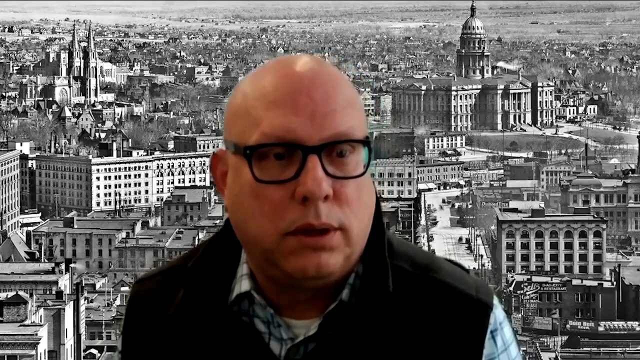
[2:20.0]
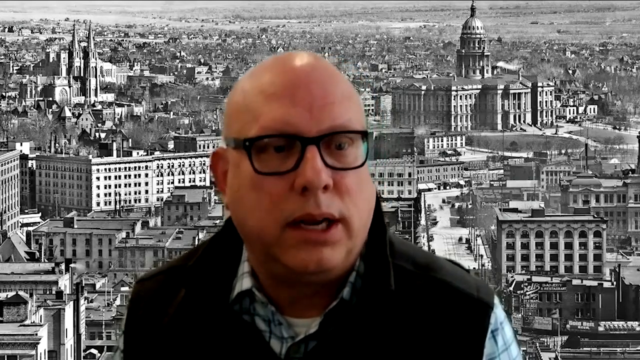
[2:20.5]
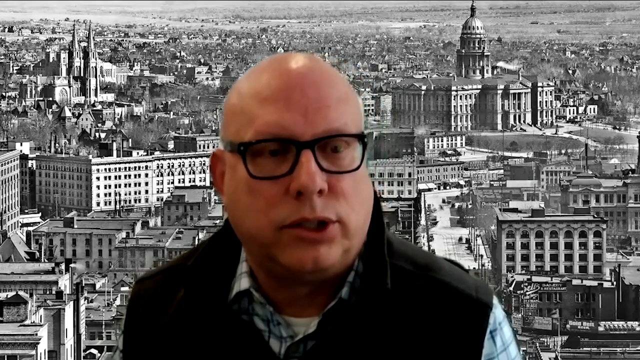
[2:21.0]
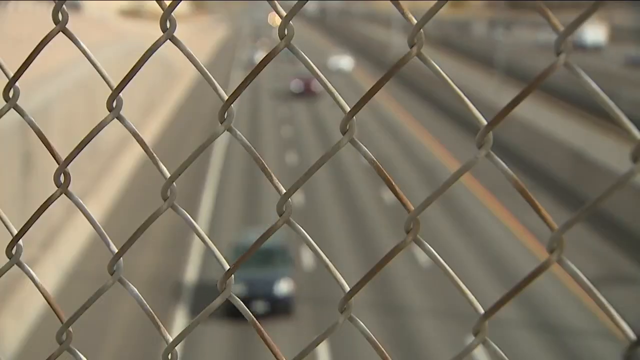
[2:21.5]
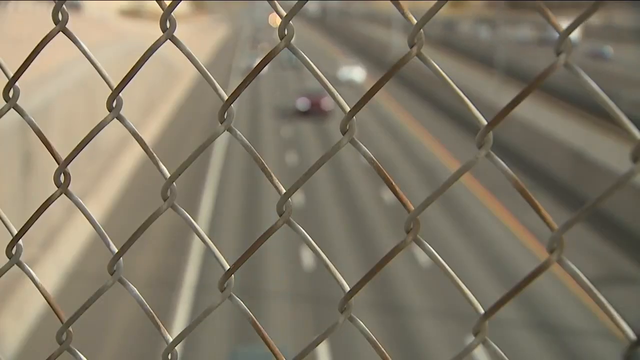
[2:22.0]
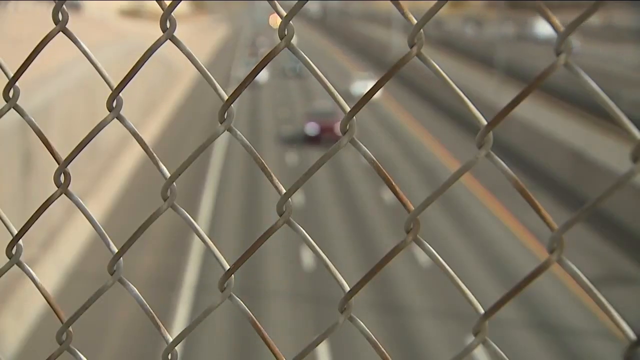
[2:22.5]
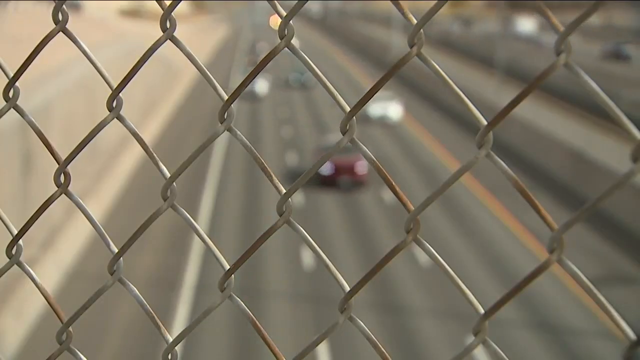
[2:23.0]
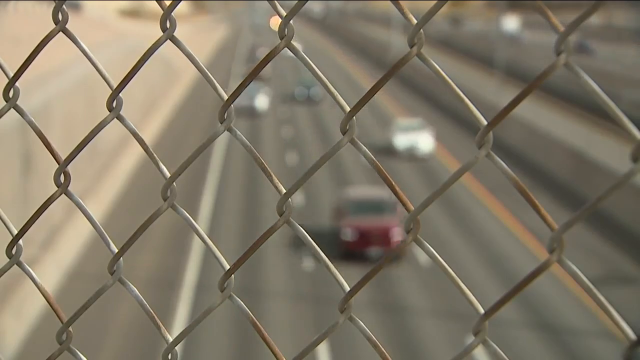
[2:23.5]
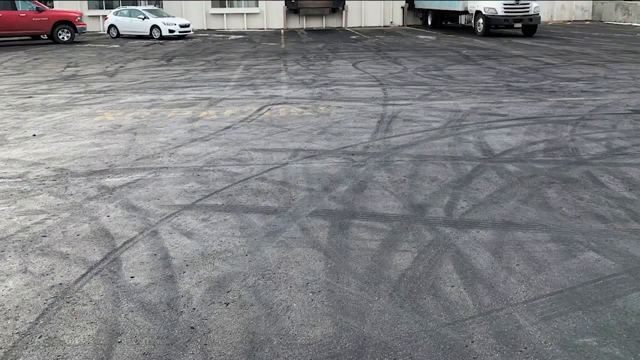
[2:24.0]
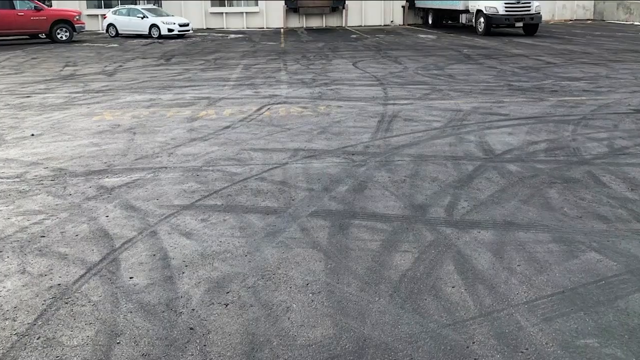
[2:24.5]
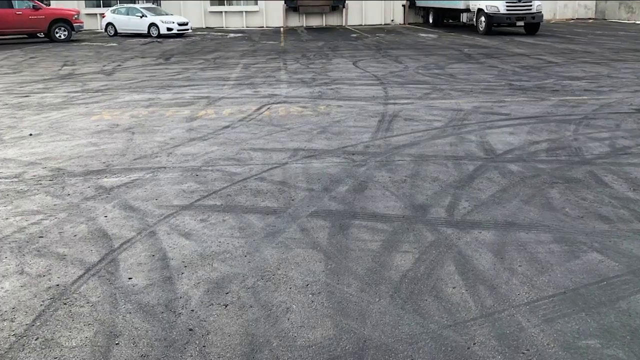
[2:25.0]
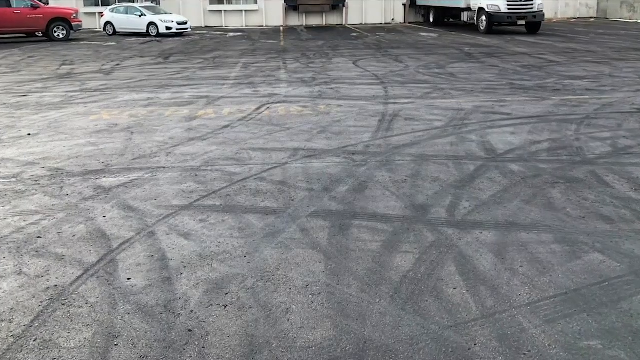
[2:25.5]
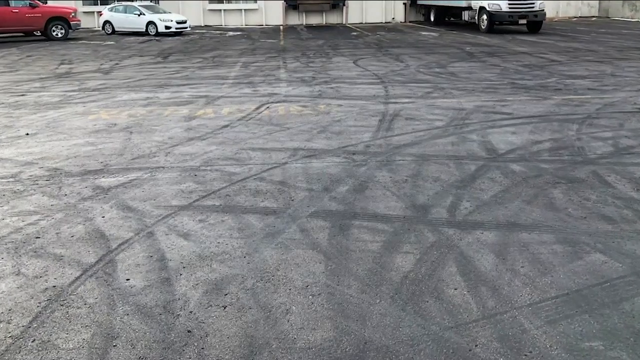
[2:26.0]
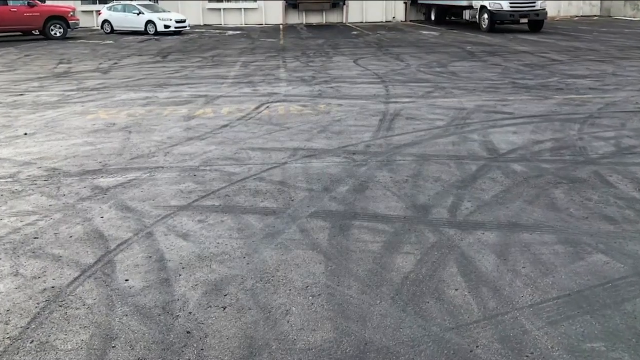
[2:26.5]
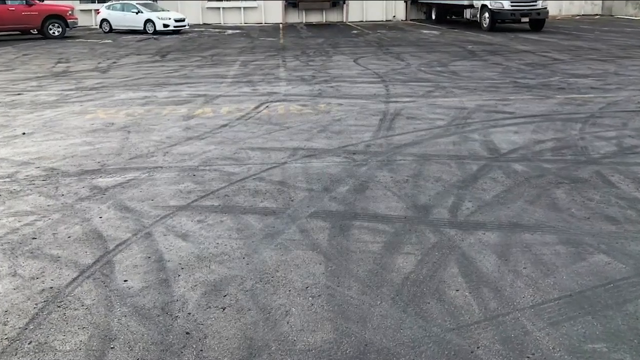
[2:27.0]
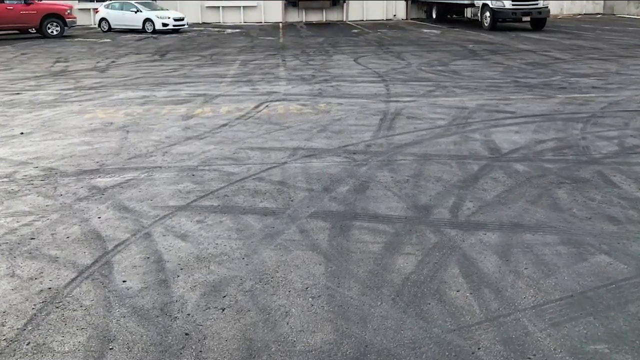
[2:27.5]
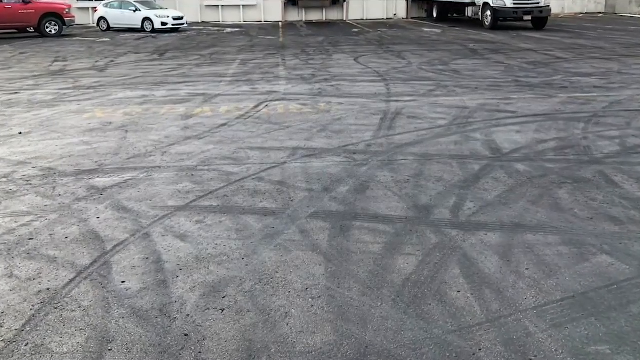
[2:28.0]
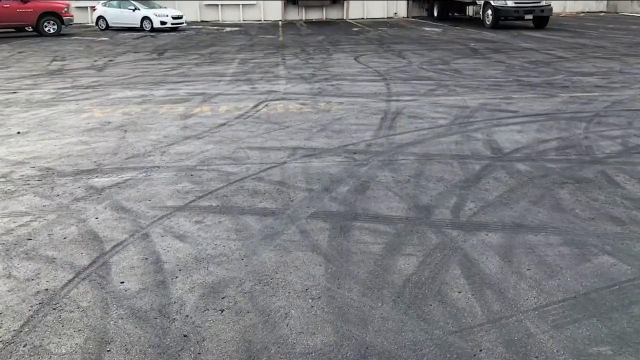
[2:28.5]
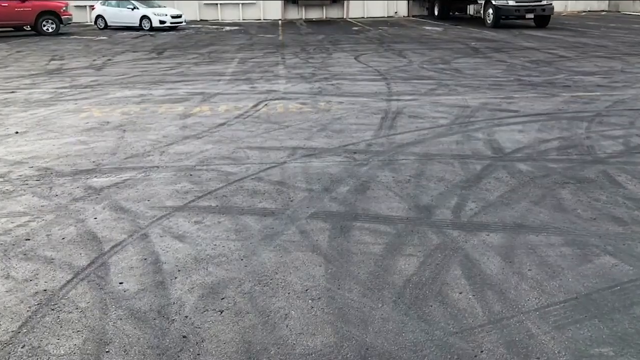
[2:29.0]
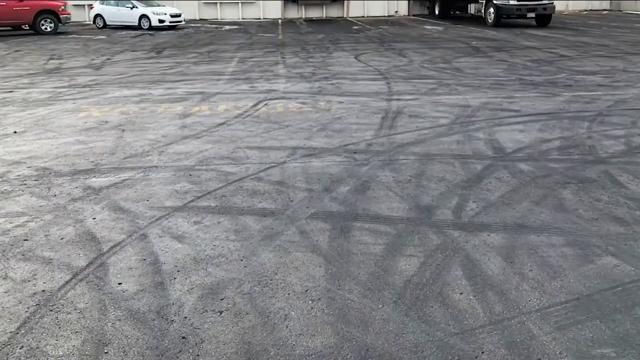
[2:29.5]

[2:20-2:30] The bald Caucasian man in the black coat and black plastic-framed glasses continues to speak in front of the green screen displaying black and white architecture, his head moving as he talks. The scene transitions to a view through a chain-link fence onto a road with cars below; a few blurred cars drive onward toward the viewer. Then a parking lot appears with a large amount of fresh tire skid marks on the asphalt and a few vehicles in the back of the image. The camera zooms in.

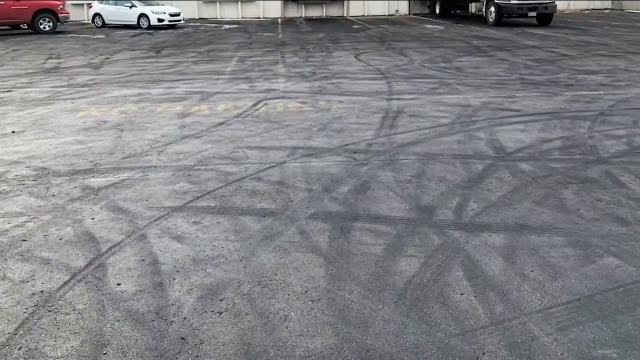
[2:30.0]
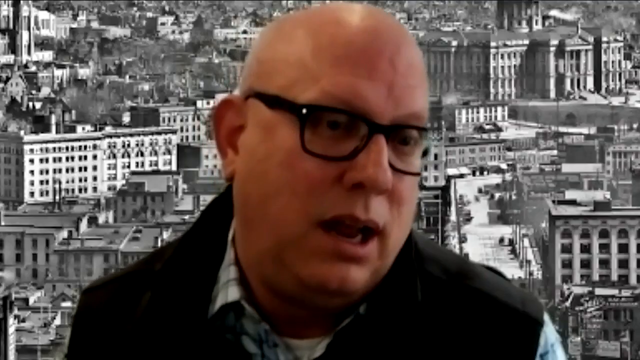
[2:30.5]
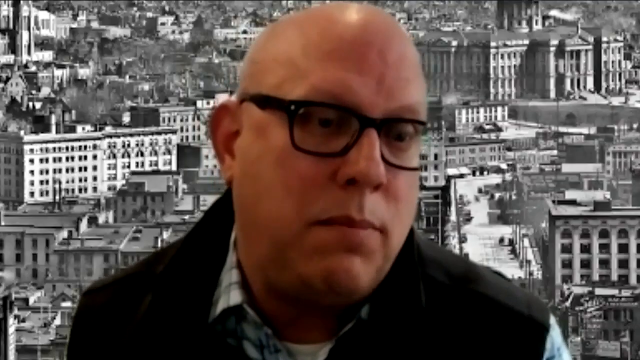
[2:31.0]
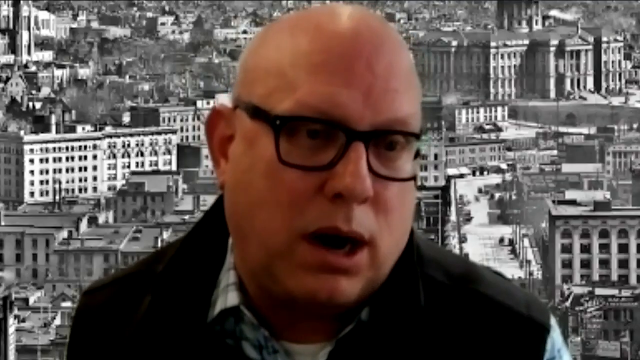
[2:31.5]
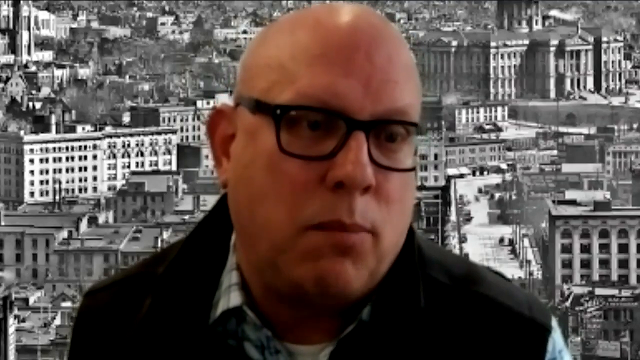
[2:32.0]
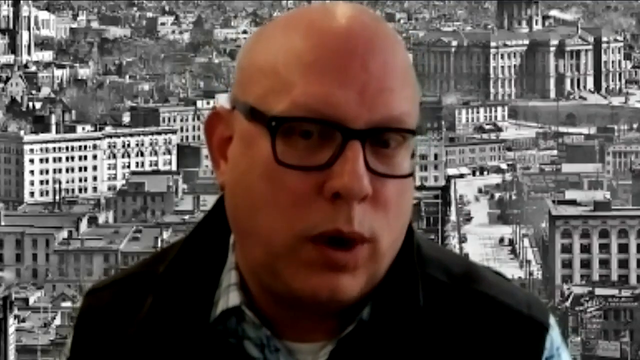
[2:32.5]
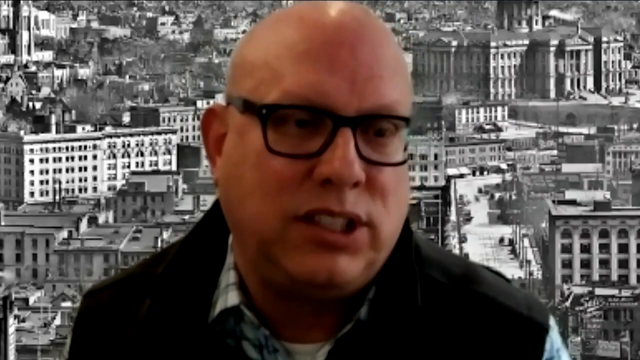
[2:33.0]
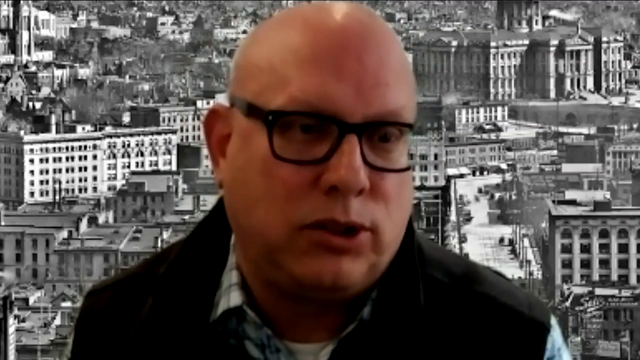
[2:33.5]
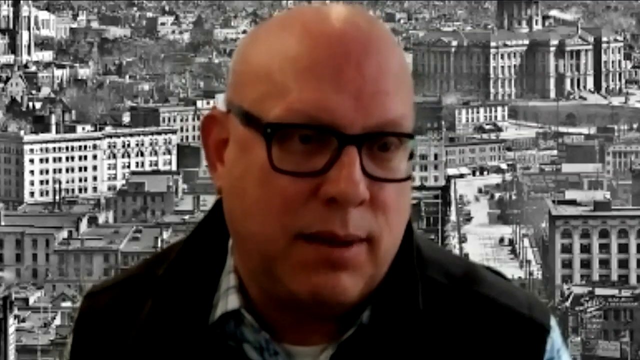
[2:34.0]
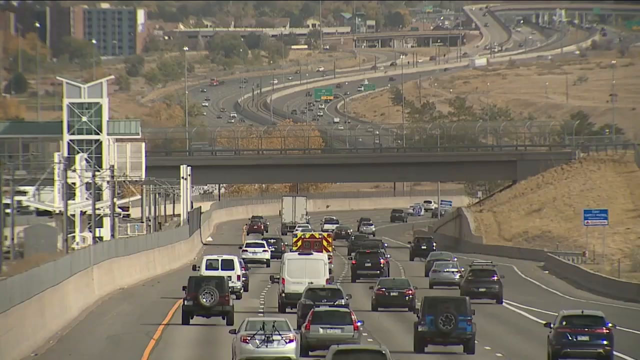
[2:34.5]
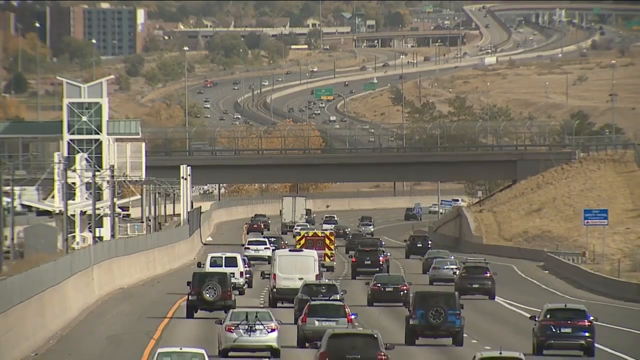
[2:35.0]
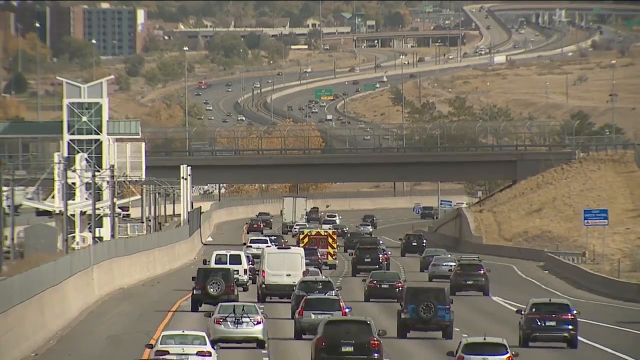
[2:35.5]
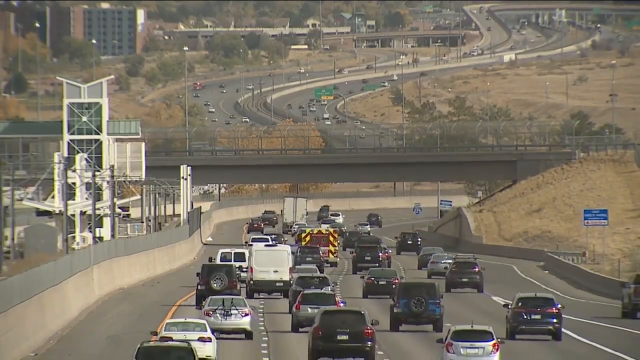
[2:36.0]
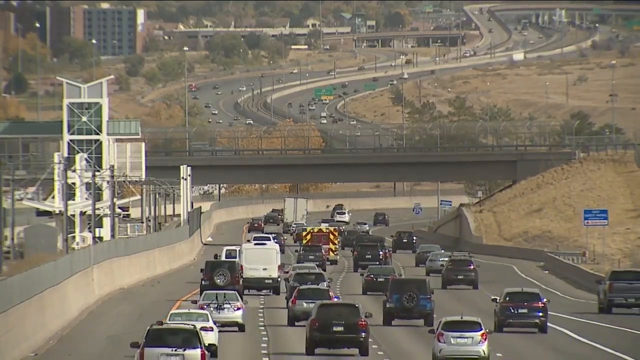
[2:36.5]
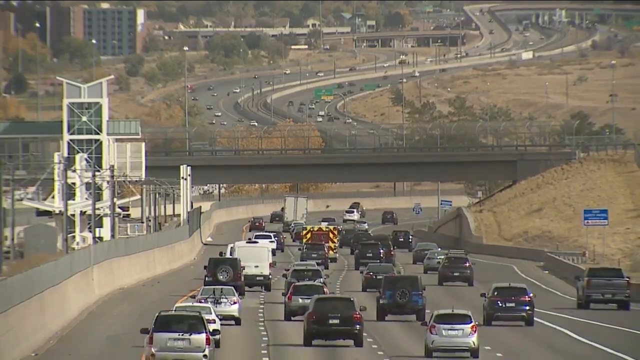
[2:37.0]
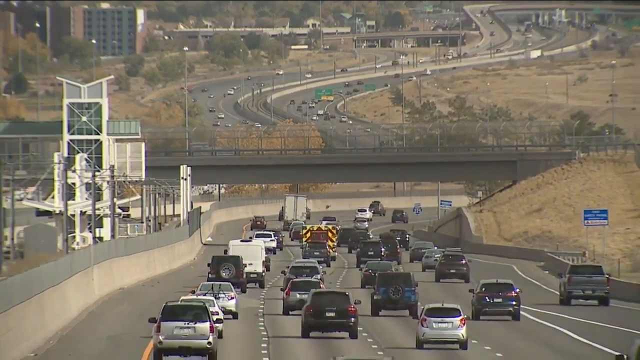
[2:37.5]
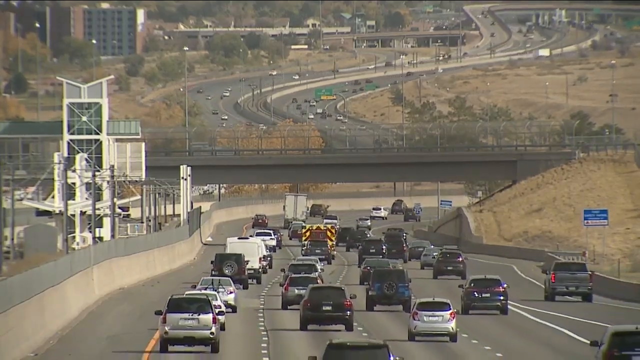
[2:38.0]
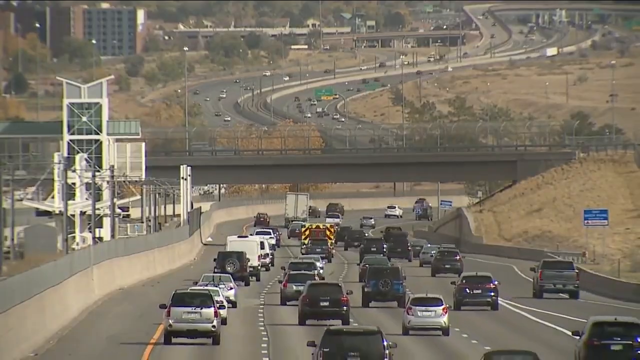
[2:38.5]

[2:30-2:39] The parking lot with its large amount of fresh skid marks and burnouts from tires on the asphalt remains on screen. The scene transitions back to the bald Caucasian man in the black coat and black plastic-framed glasses, who continues to speak in front of the green screen displaying black and white architecture, his head moving as he talks. The scene then shows a smoggy-looking day, with the backs of many different types, colors and kinds of vehicles as they begin to drive along the highway, pass underneath a bridge and round the corner.